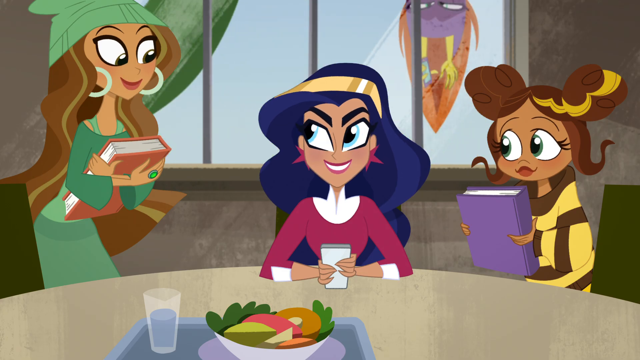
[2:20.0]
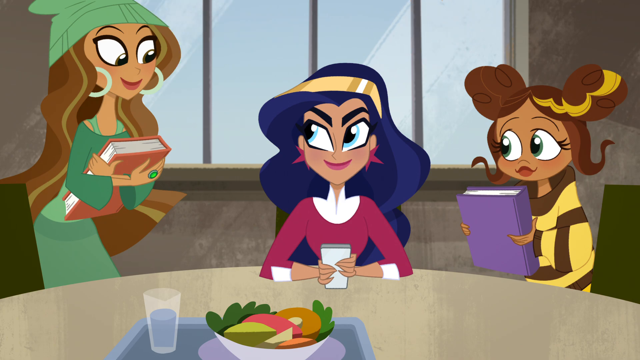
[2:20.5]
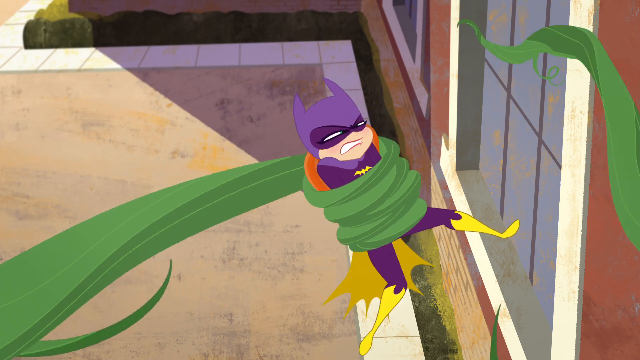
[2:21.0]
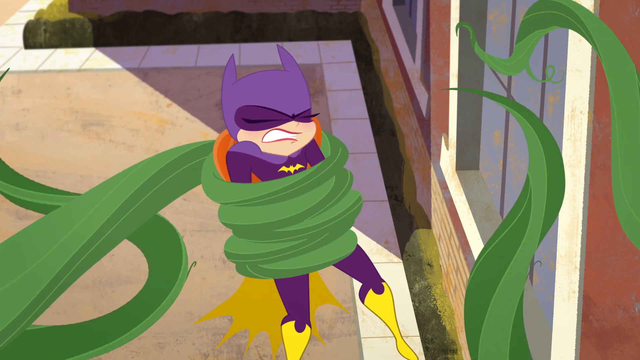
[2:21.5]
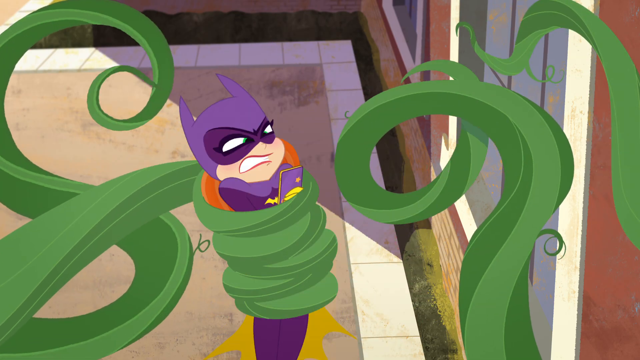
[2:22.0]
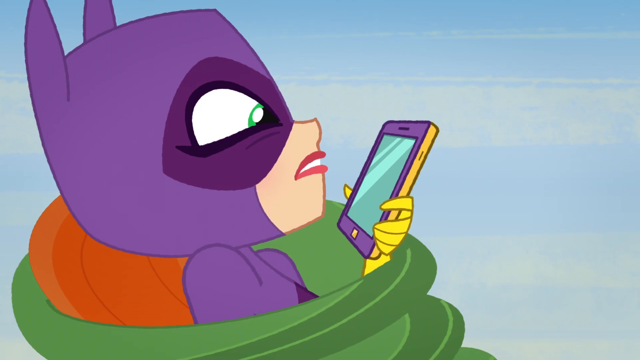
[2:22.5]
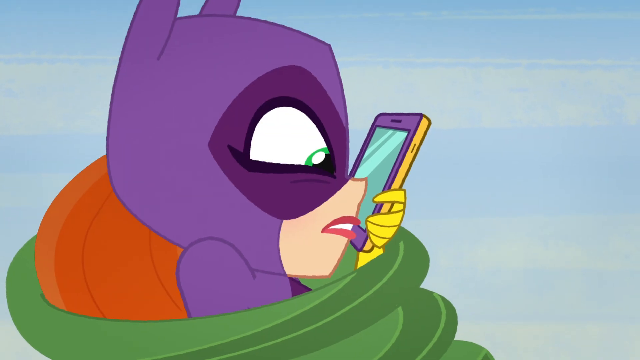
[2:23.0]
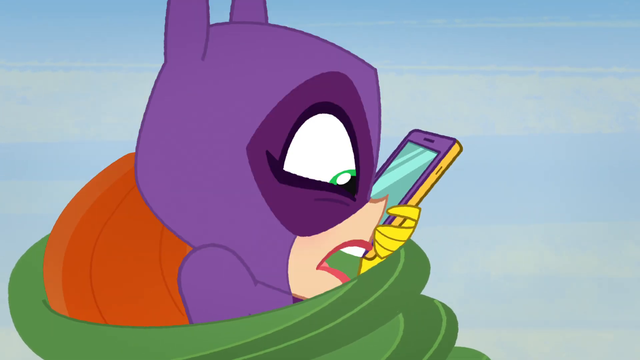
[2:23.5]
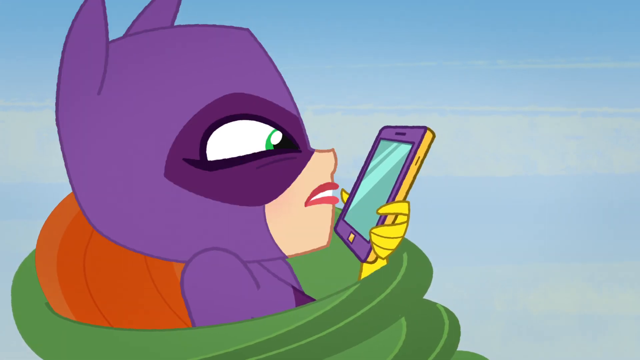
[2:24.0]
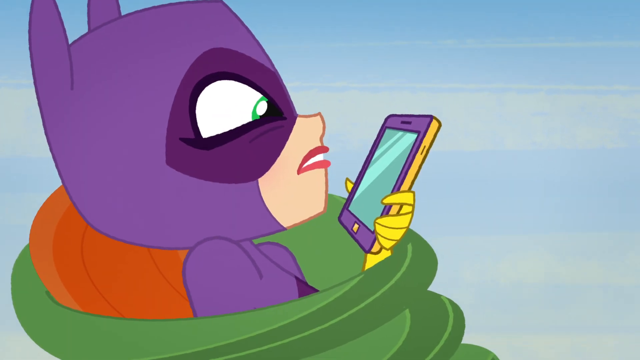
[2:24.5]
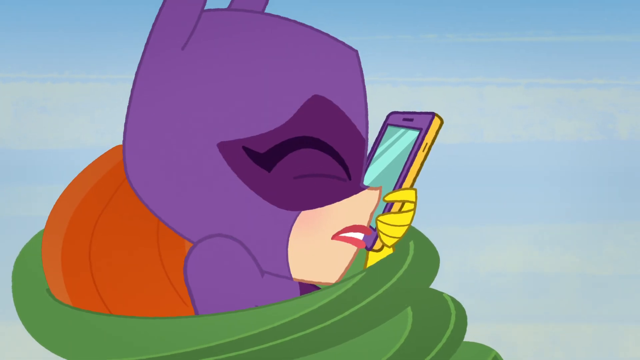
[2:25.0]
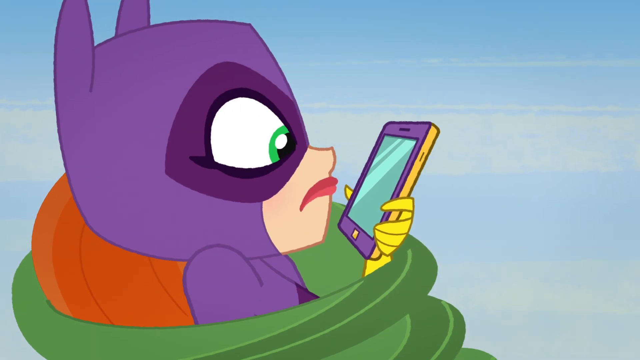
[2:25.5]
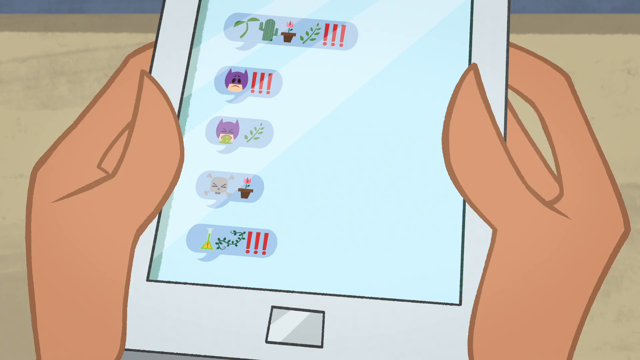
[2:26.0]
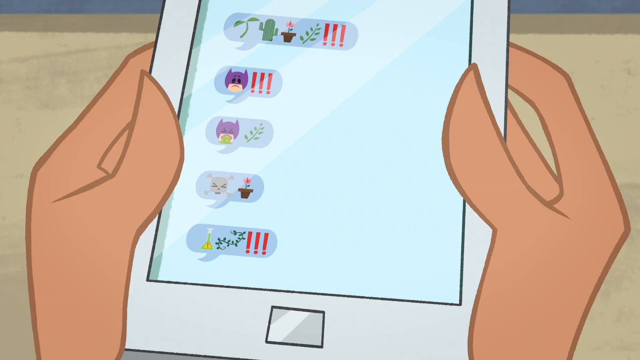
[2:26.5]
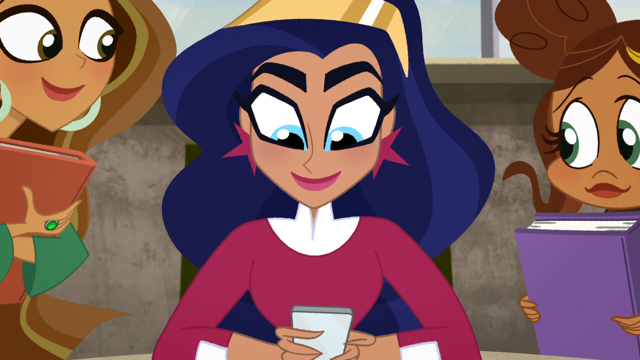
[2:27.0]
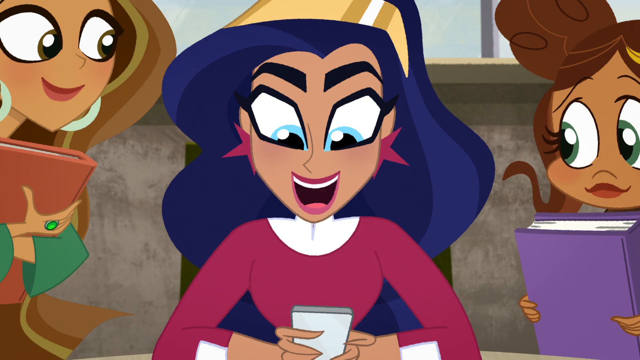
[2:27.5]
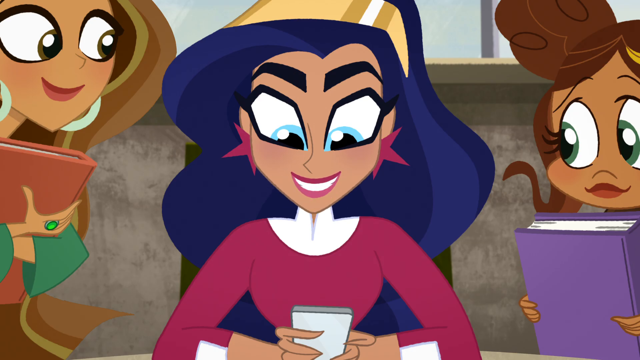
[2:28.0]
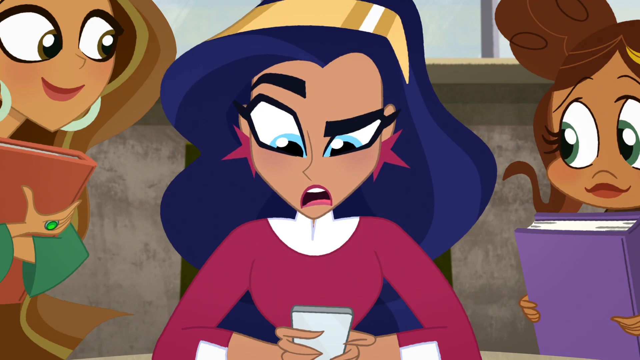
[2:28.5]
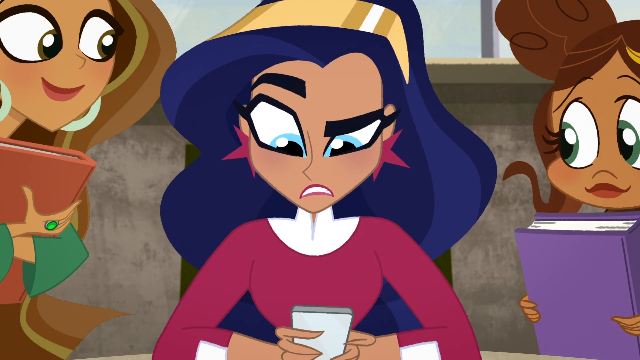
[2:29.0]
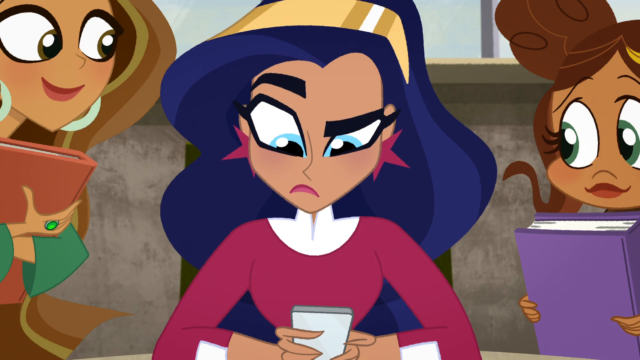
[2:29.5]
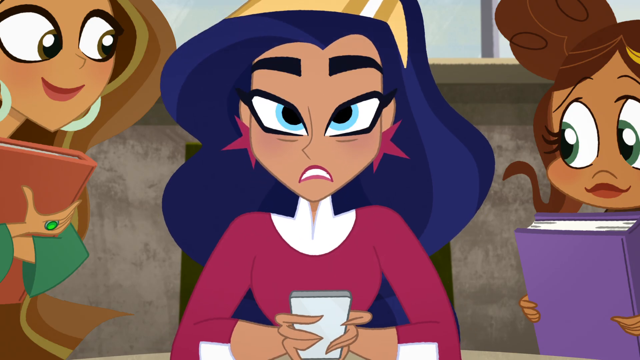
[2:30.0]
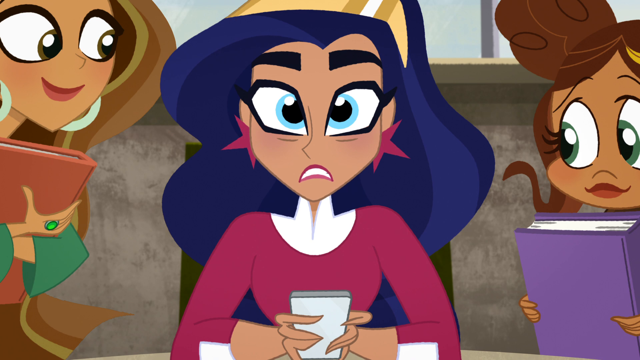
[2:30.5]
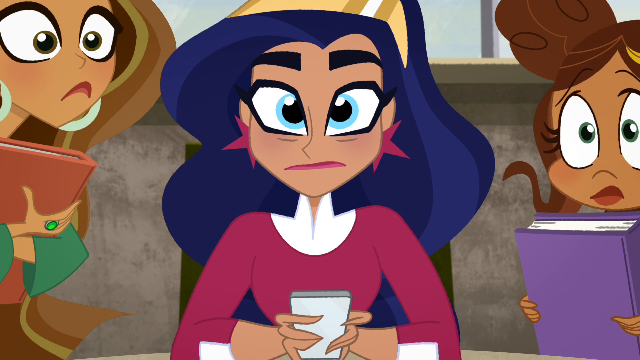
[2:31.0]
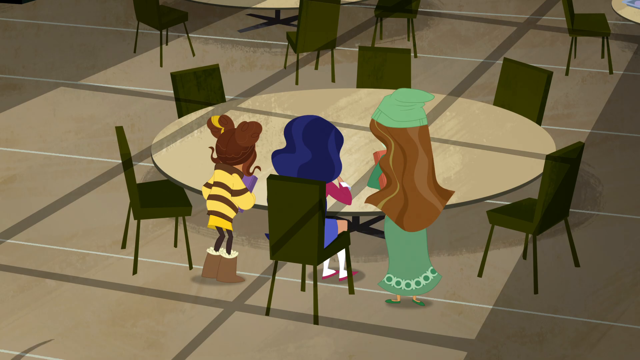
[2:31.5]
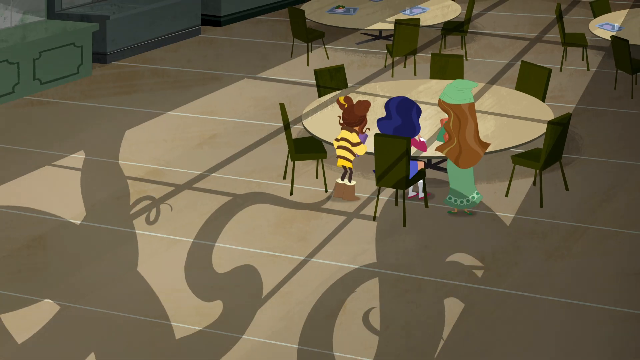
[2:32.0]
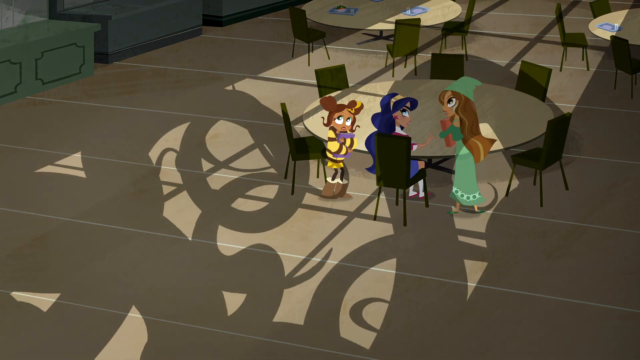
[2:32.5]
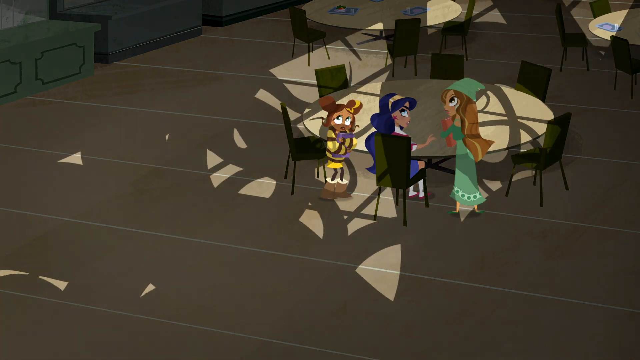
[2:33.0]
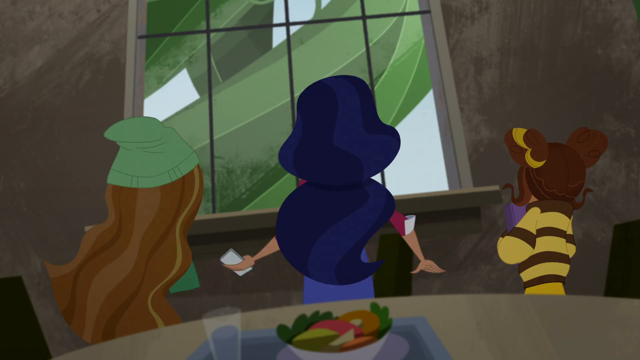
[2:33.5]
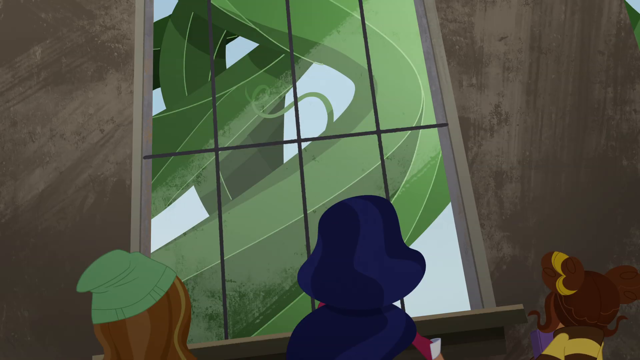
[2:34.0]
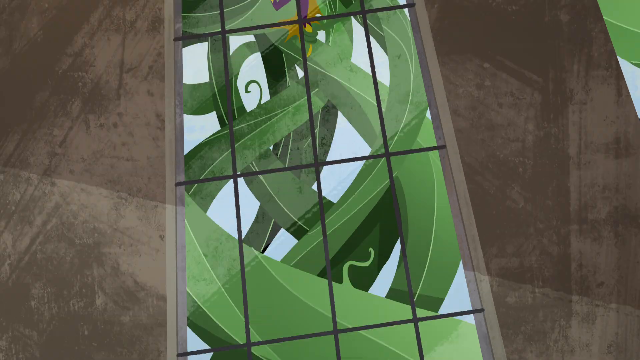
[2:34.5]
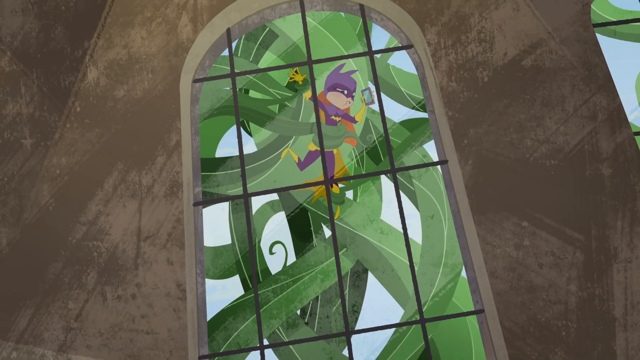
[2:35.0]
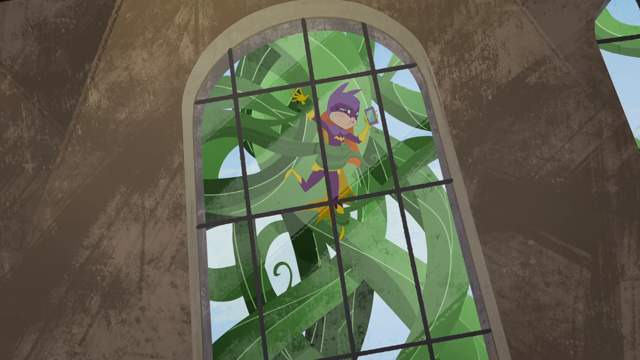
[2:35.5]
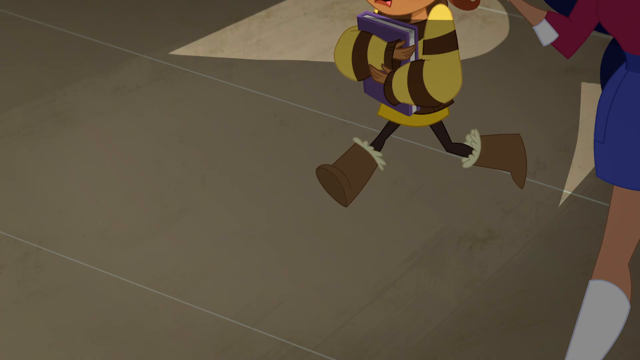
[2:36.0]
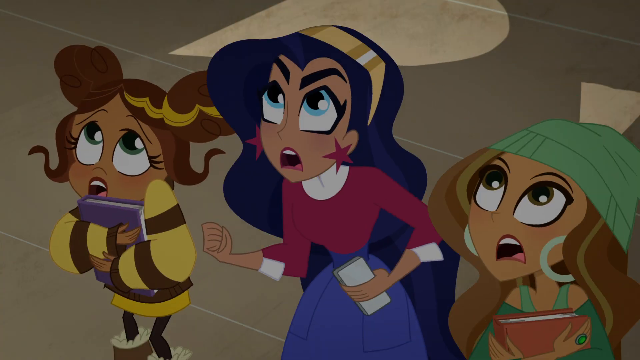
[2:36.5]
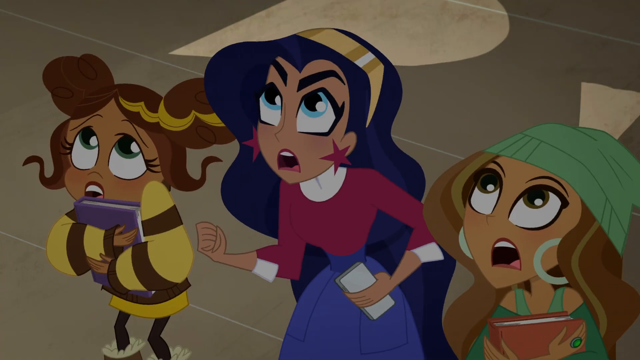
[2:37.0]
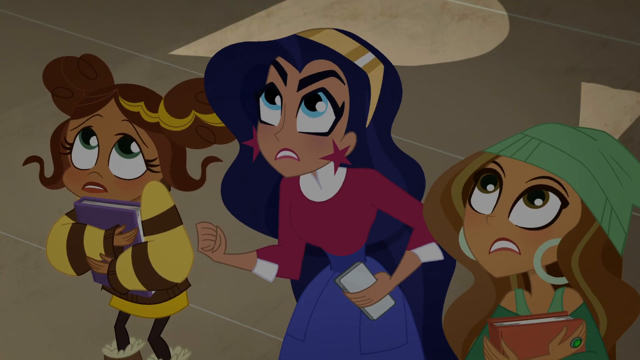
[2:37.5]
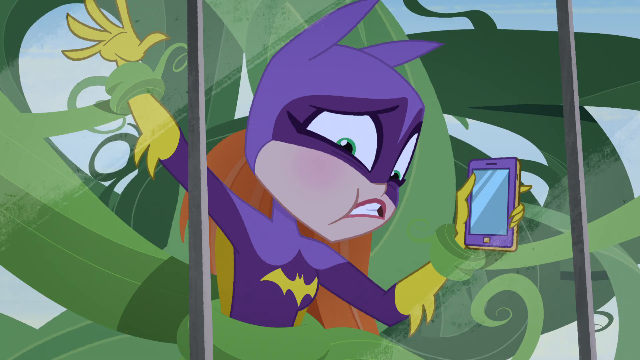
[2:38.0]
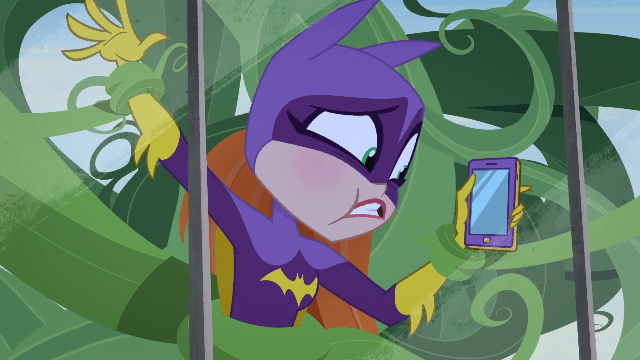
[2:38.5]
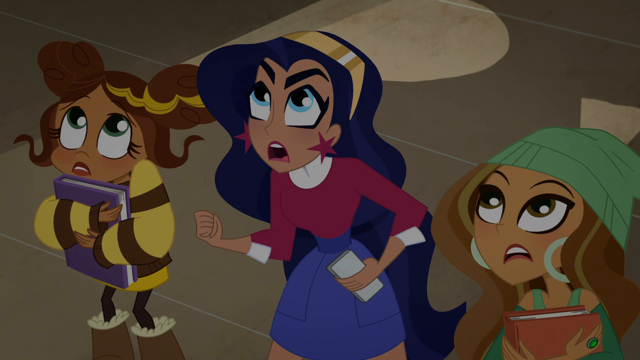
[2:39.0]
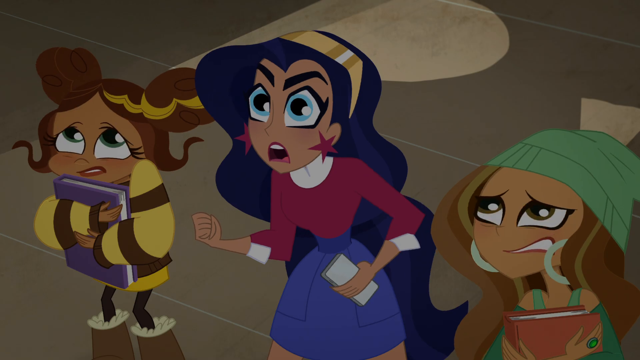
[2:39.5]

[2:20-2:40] The girl with blue hair is still sitting at the table in the pizza parlor, and outside the window the superhero hangs upside down. Both have cell phones, and the superhero appears to be sending the girl somewhat cryptic text messages that she cannot figure out. Outside, the tentacle monster wraps the superhero up even tighter, and the superhero taps her nose on the front of her phone to send messages. The girl looks really confused, but then they see the superhero wrapped up by the tentacle monster outside the window, and the three girls walk over to the window. The superhero sends another message, and the girl with blue hair notices it arrive on her phone as the superhero sends it. The superhero is Batgirl, with ears on top of her uniform and a yellow bat on its front.